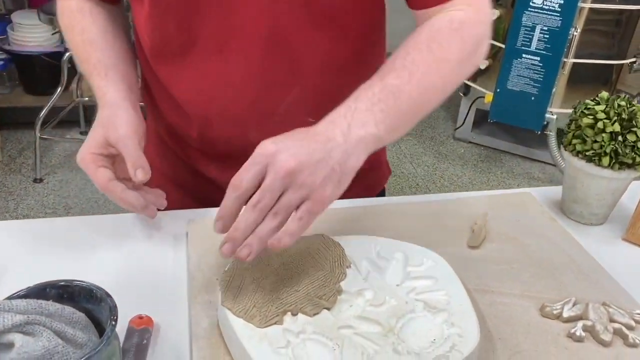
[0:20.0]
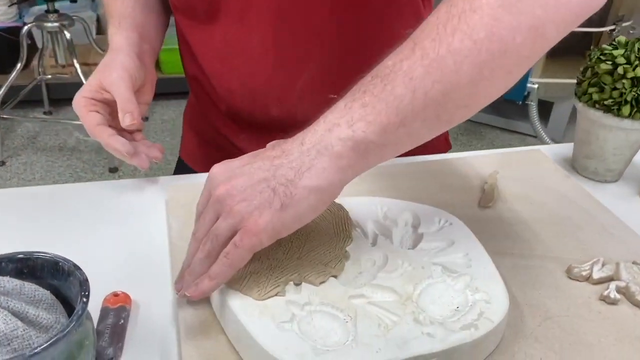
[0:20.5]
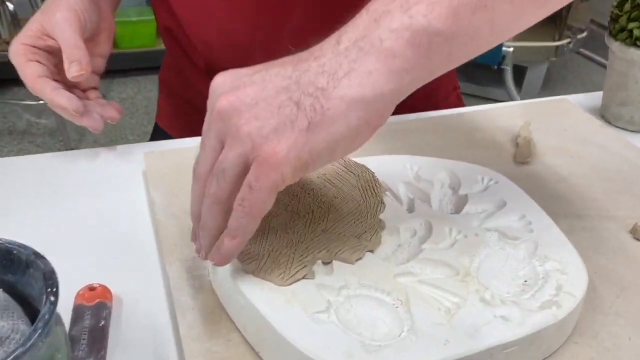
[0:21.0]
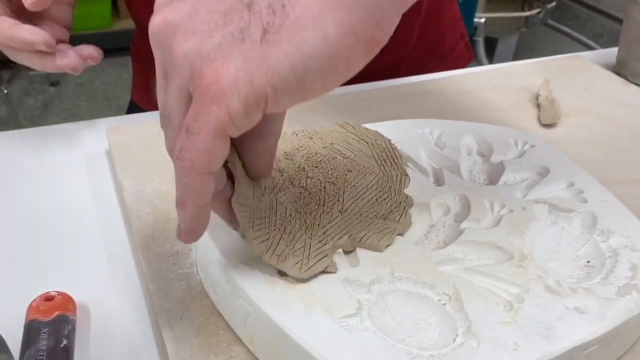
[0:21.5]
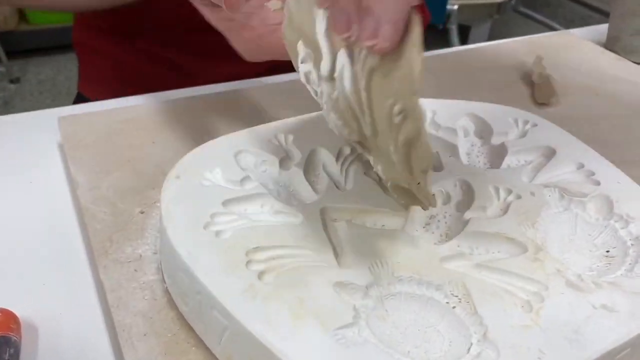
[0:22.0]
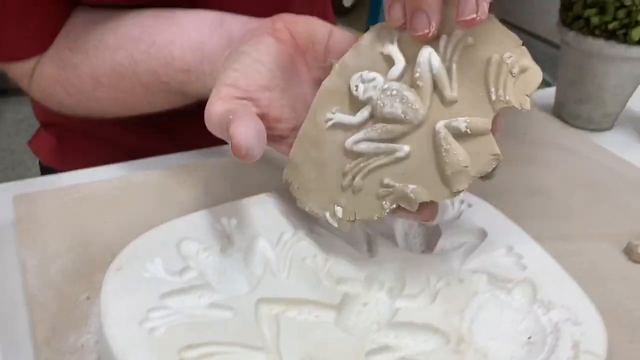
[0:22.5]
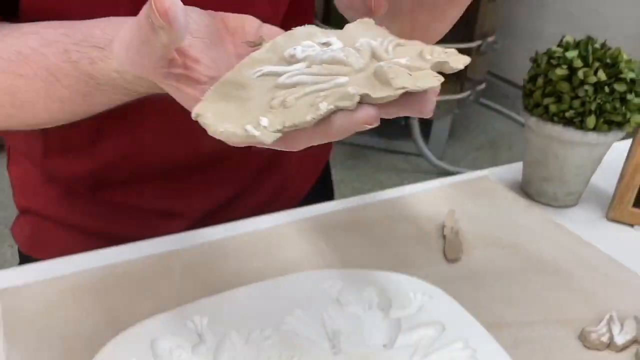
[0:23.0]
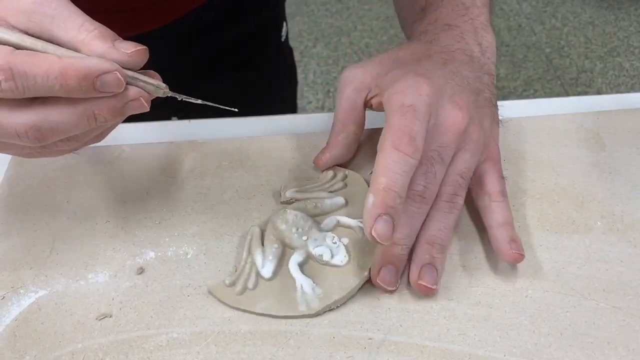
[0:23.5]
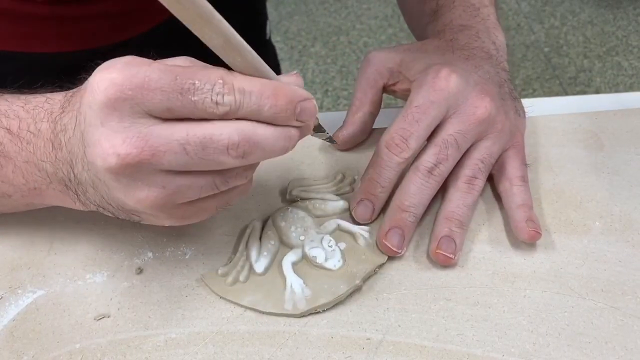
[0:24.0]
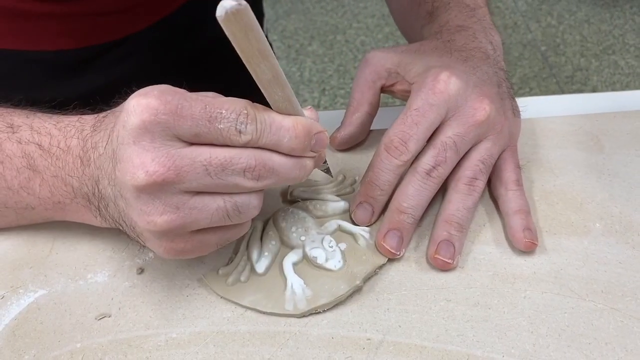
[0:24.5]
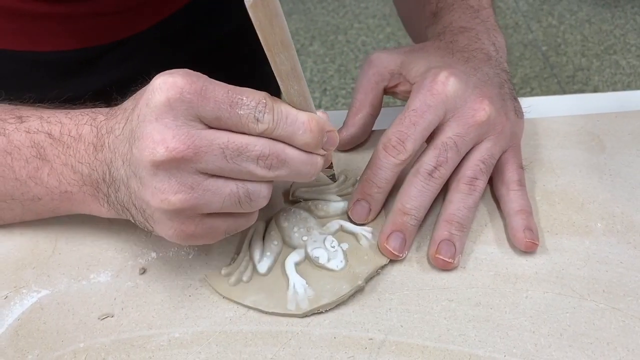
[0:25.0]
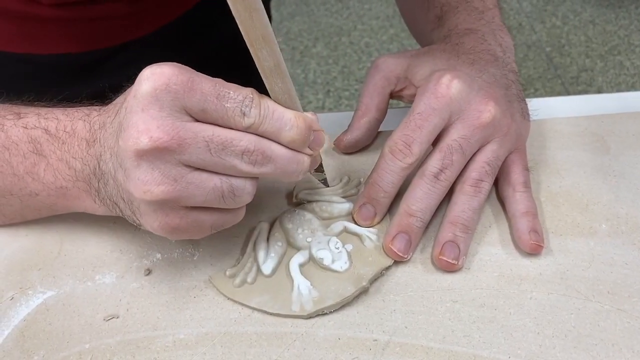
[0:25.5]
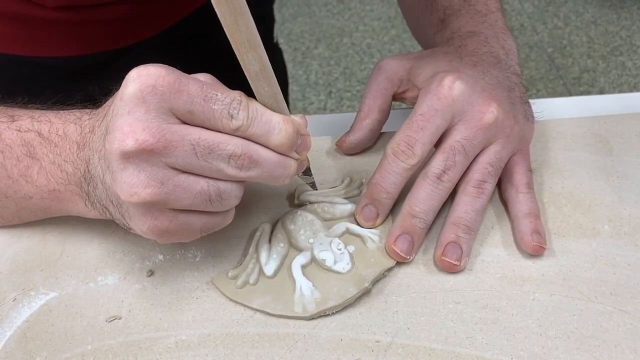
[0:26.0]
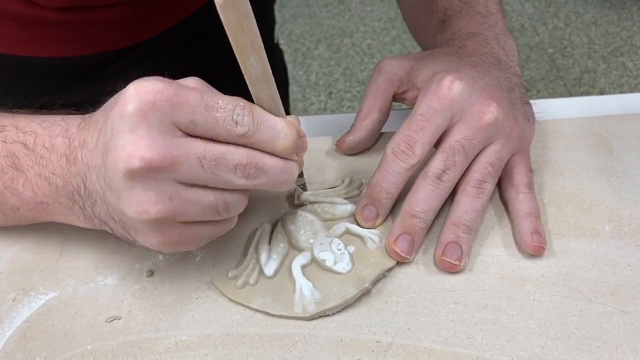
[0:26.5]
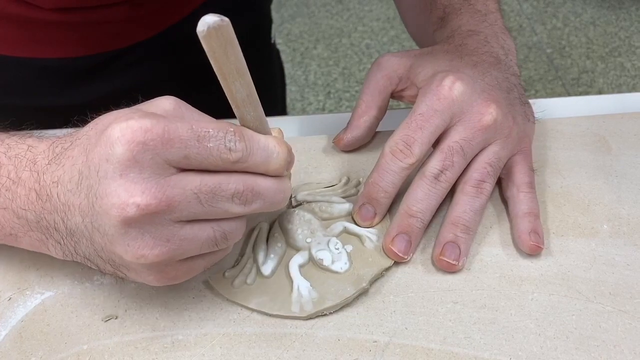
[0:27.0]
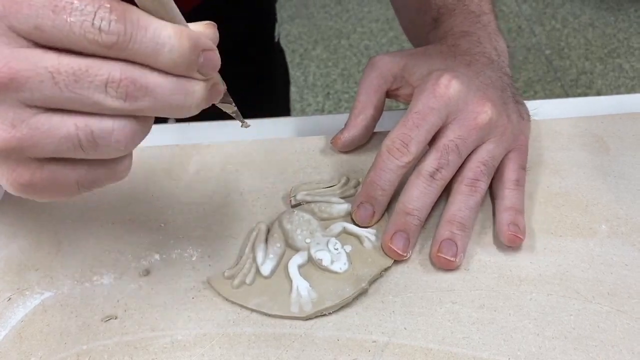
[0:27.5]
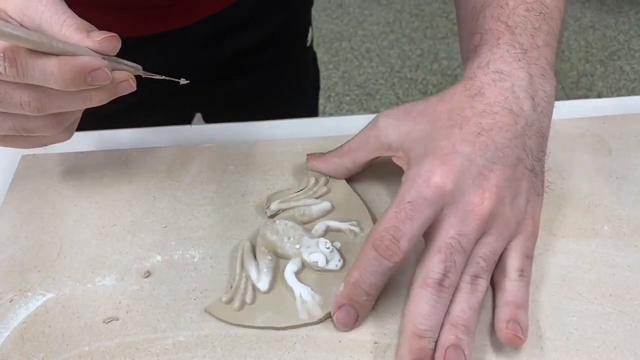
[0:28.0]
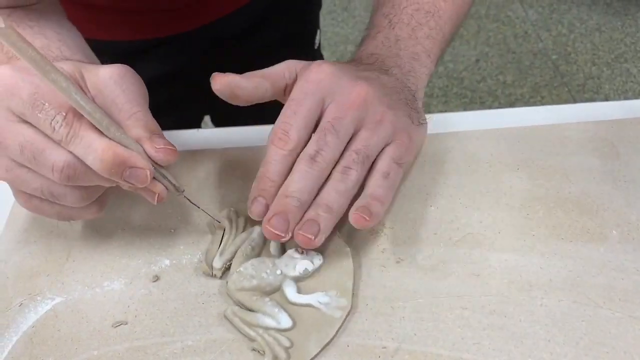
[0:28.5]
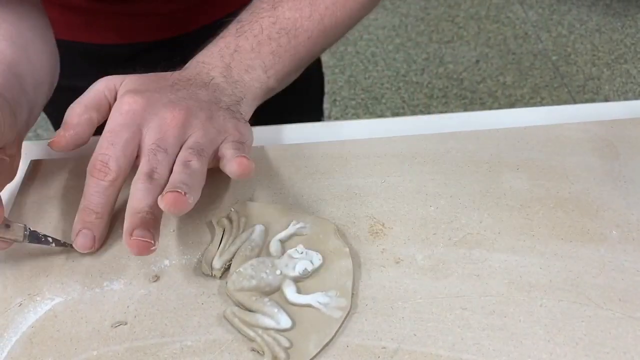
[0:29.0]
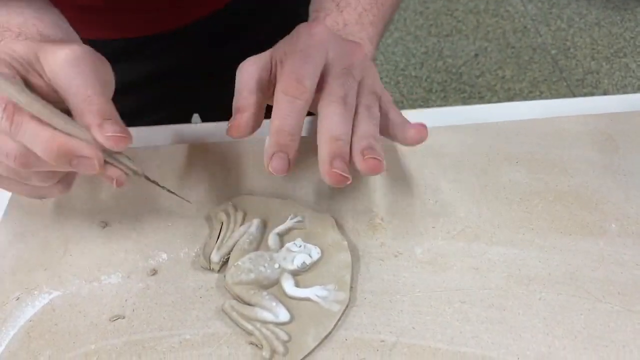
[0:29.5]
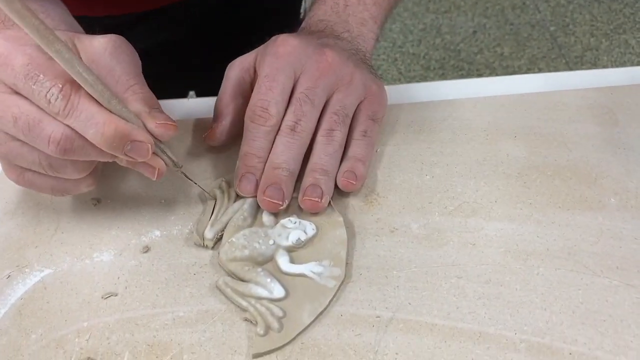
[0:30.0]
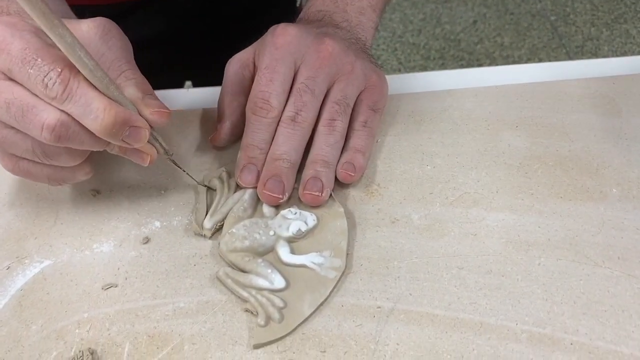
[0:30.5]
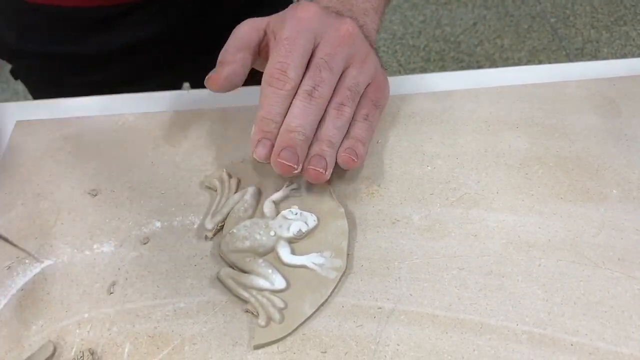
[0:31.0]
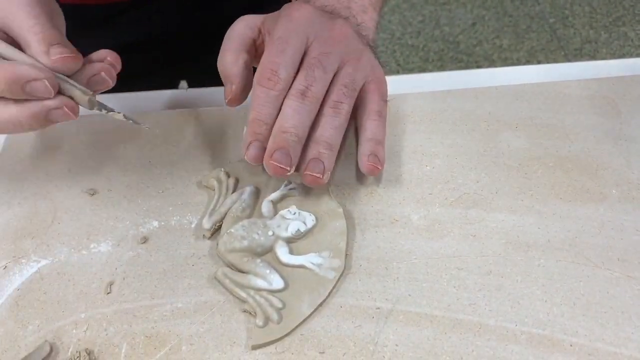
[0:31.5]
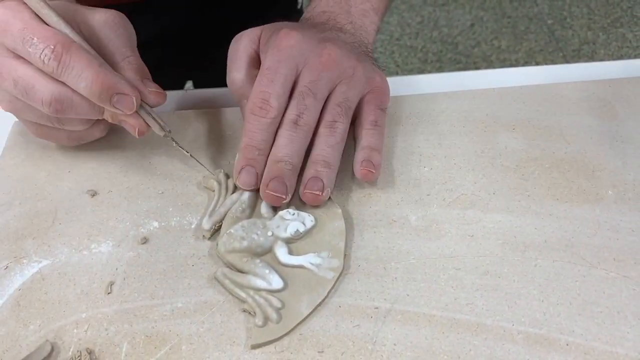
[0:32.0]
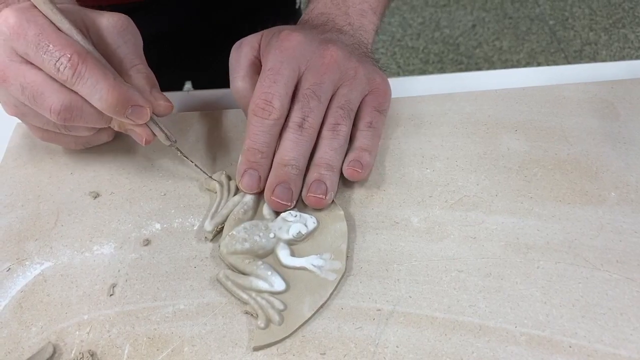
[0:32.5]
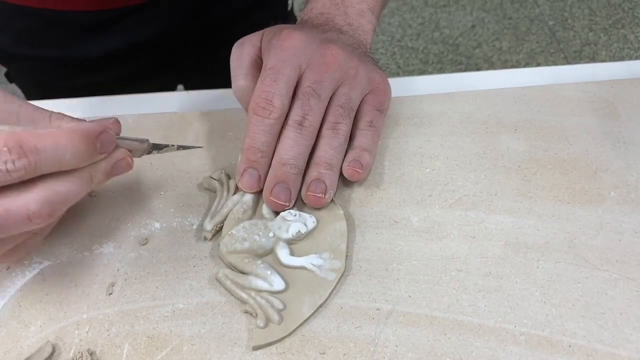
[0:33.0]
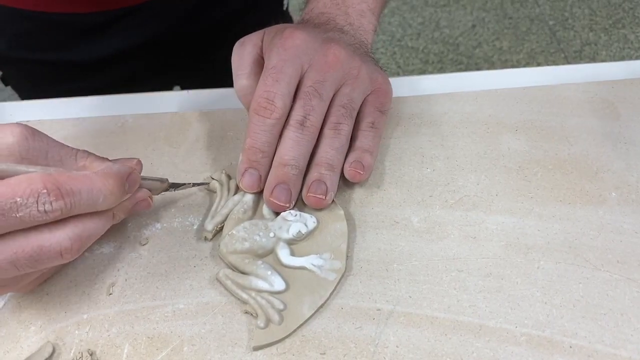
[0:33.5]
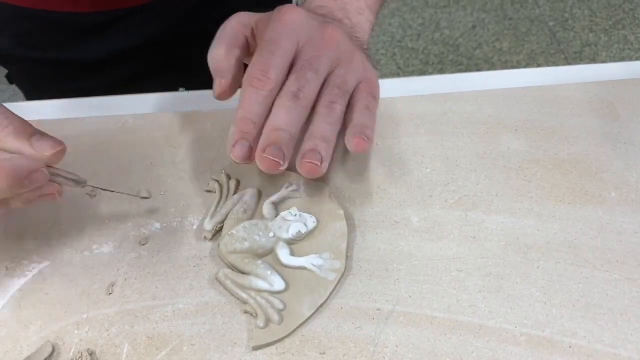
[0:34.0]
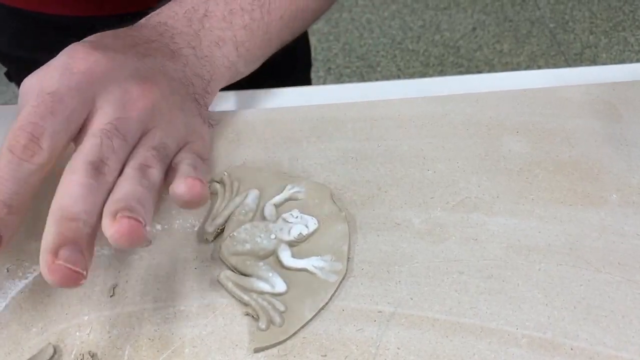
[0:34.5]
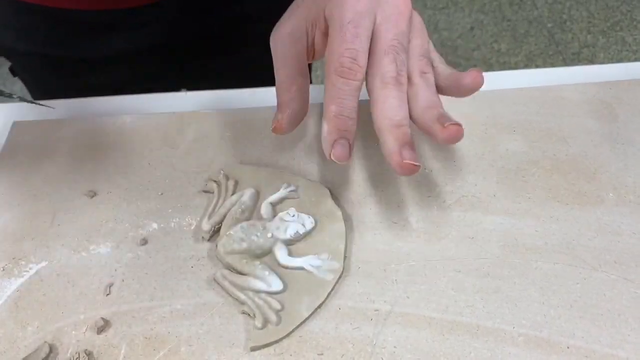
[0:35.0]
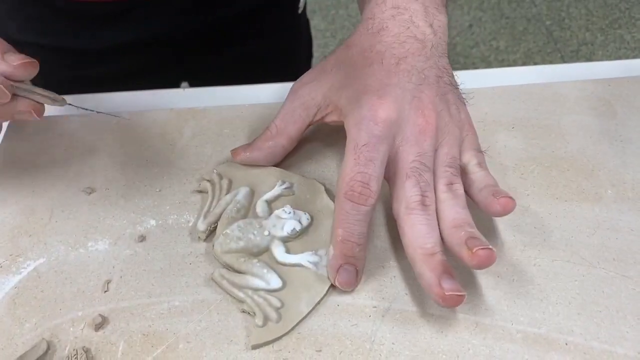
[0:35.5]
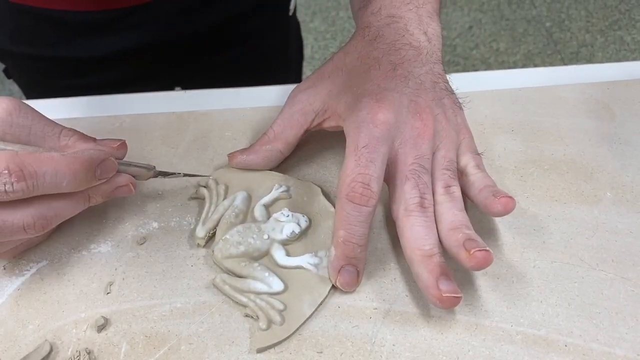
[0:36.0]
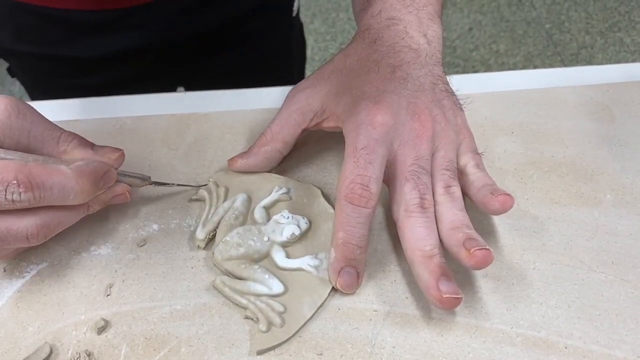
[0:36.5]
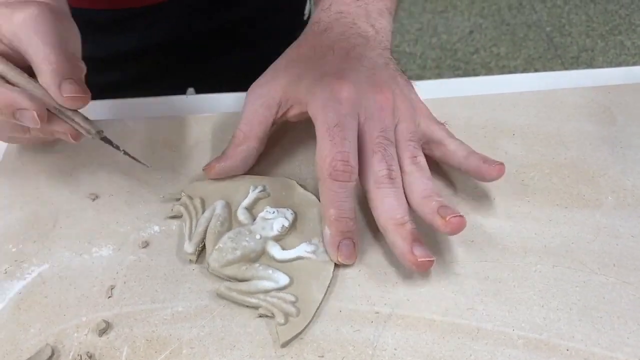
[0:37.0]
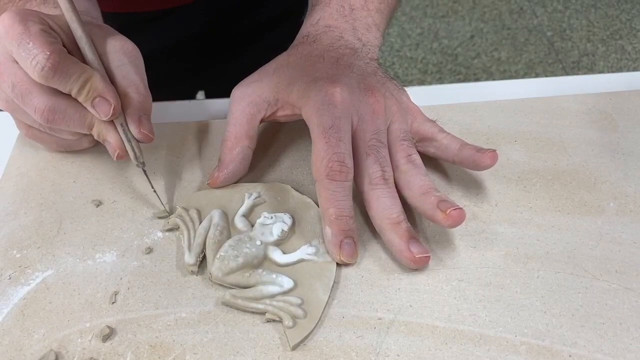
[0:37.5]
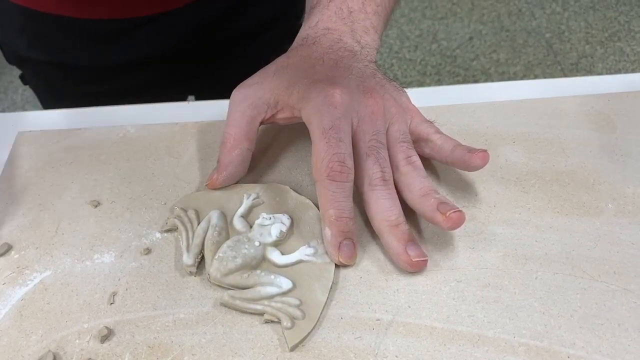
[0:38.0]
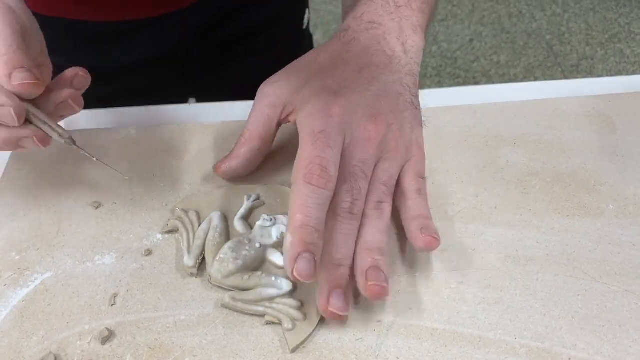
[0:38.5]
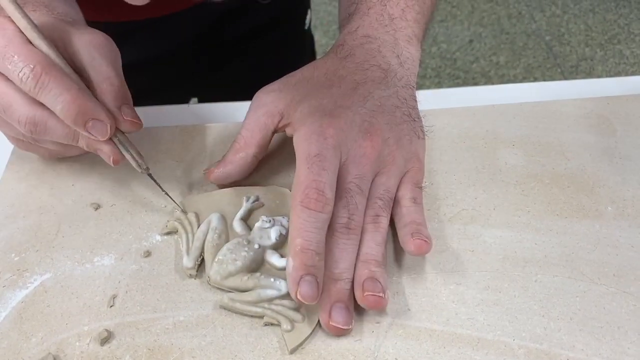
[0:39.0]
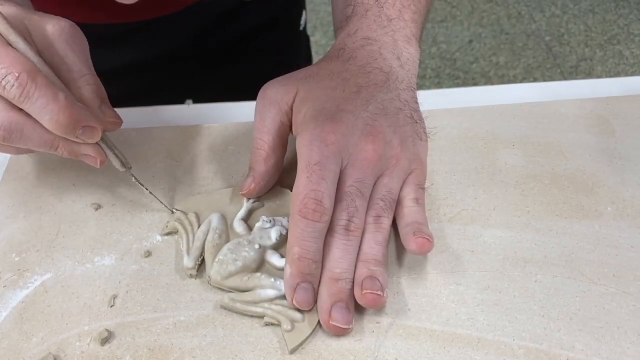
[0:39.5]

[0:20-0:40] The camera focuses in on the man's hands, then down onto the putty and the object he is working on. He picks the putty up off the display, and its underside shows the formation of the frog. He turns it over and lays it down on the board beneath him. With a scalpel or sharp tool in his right hand, he slowly begins cutting out the shape of the frog, starting with the legs and moving around to cut off all the remaining outside parts. The frog is mainly tan, but remnants of white from the mold remain near its hands and face. The man turns the mold counterclockwise as he keeps cutting.